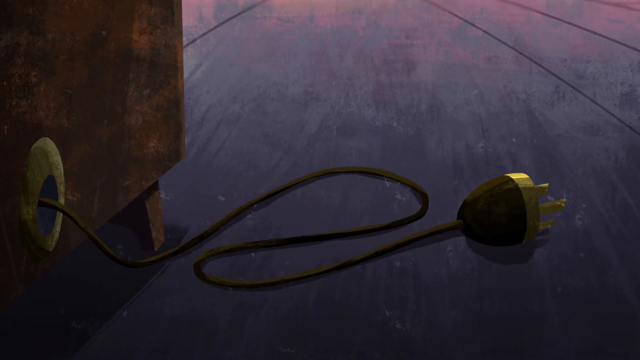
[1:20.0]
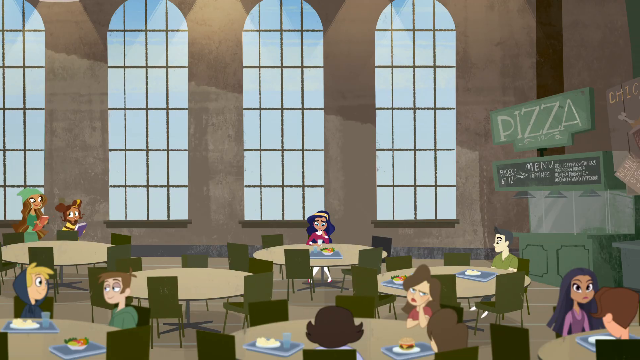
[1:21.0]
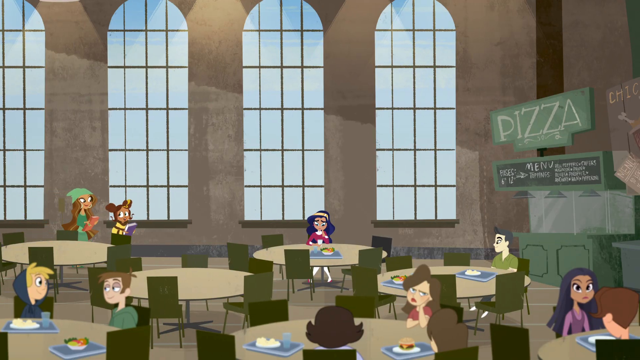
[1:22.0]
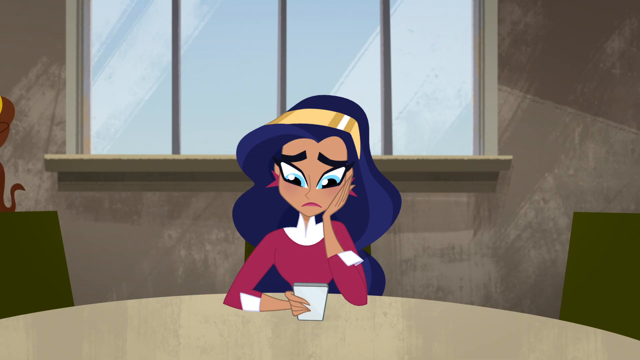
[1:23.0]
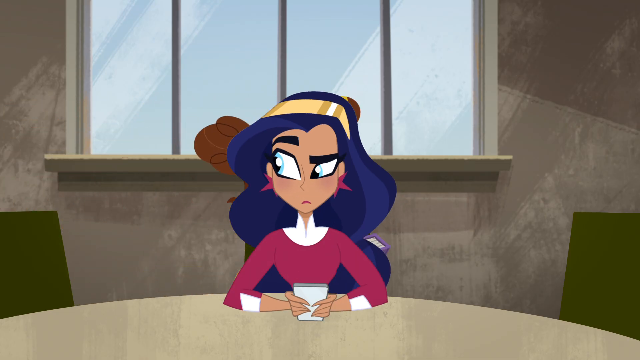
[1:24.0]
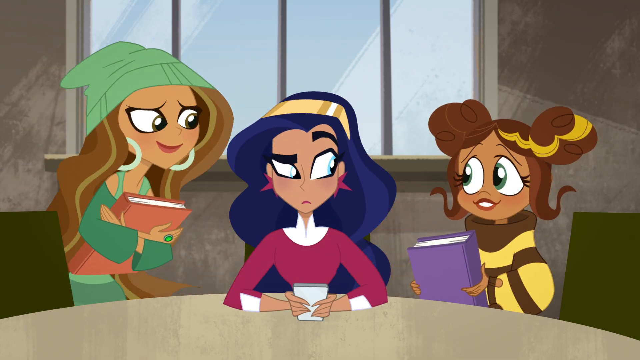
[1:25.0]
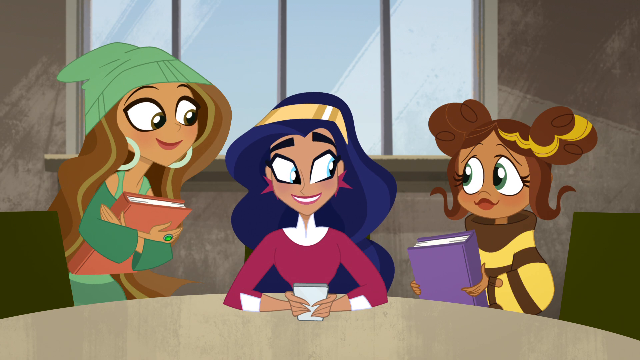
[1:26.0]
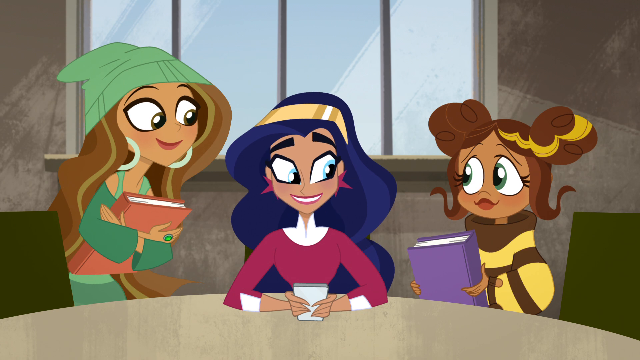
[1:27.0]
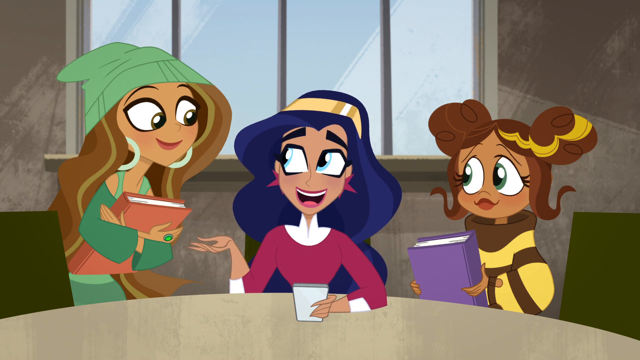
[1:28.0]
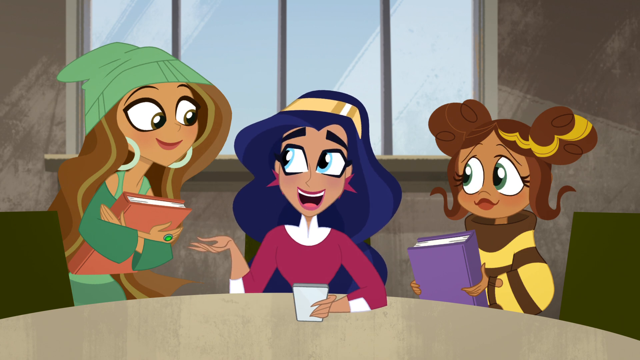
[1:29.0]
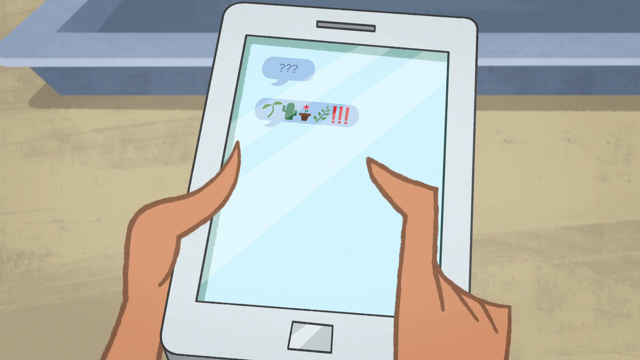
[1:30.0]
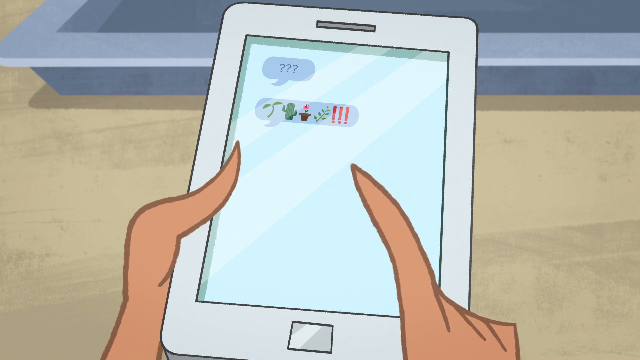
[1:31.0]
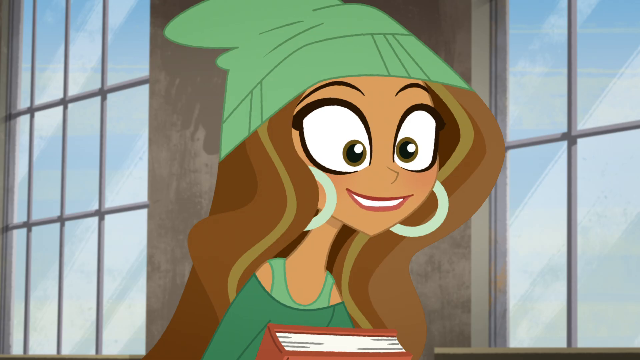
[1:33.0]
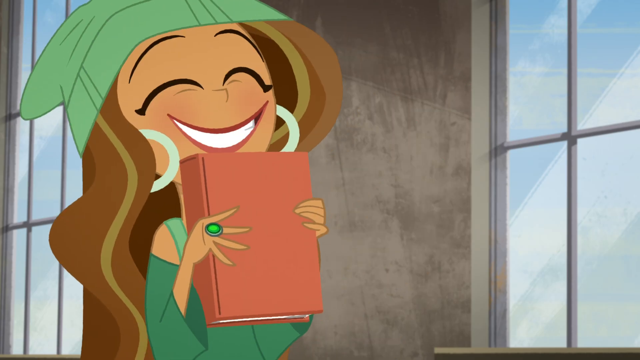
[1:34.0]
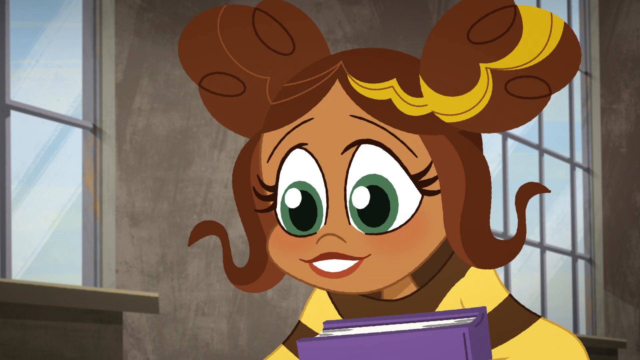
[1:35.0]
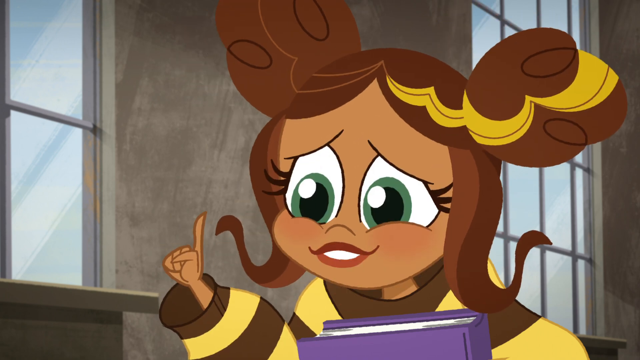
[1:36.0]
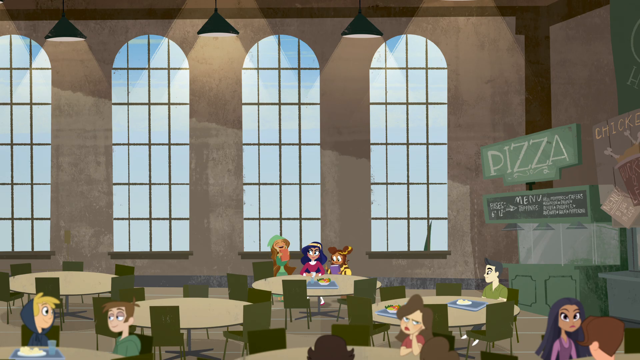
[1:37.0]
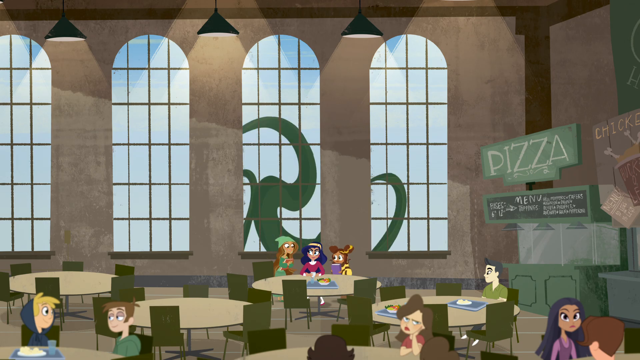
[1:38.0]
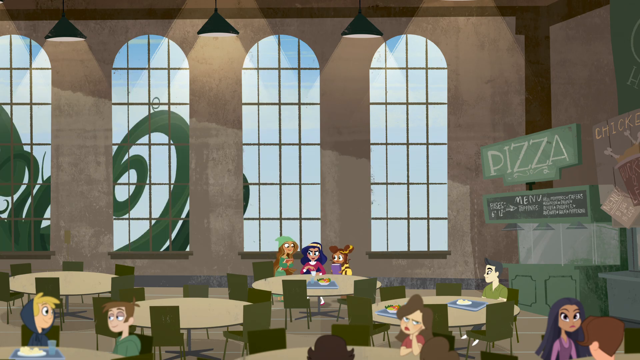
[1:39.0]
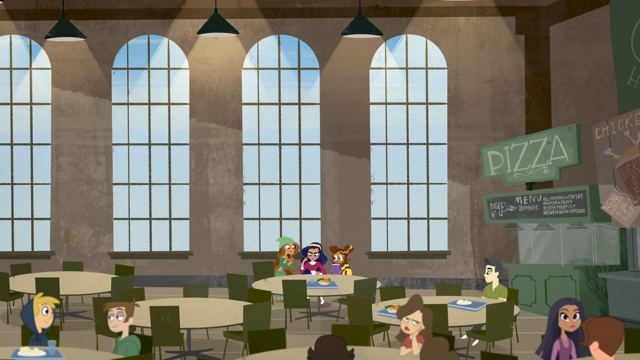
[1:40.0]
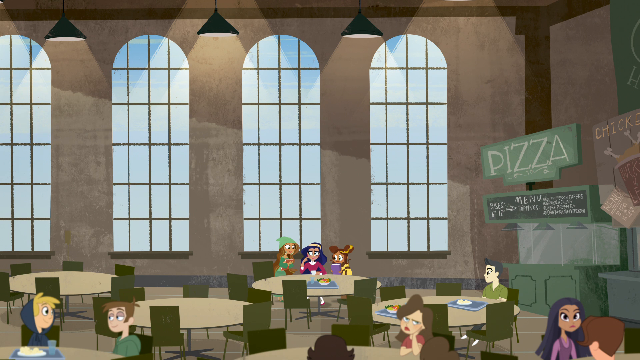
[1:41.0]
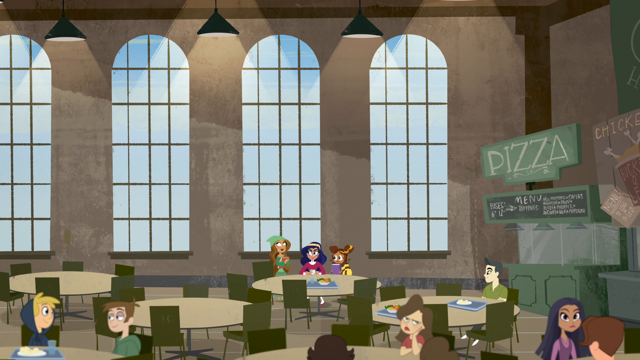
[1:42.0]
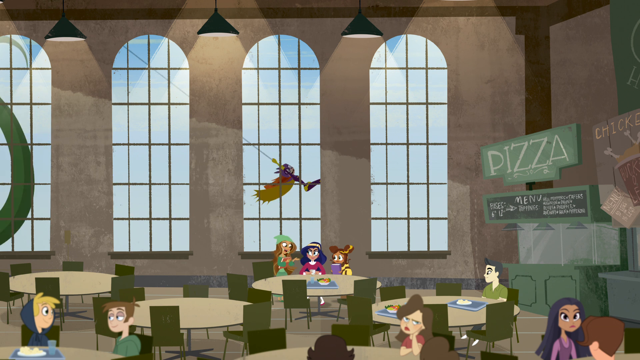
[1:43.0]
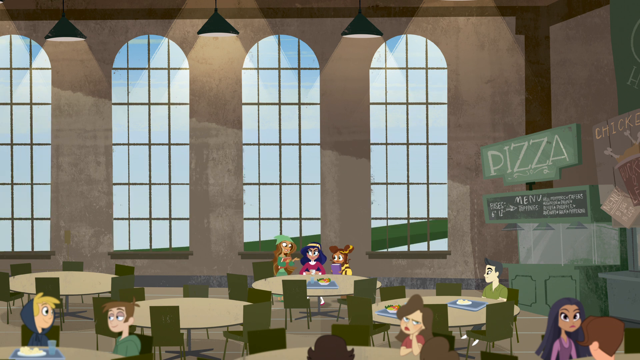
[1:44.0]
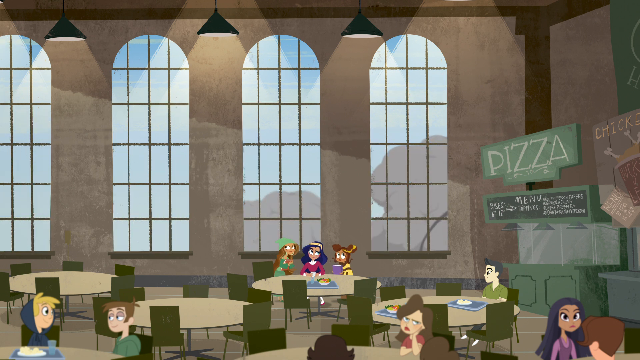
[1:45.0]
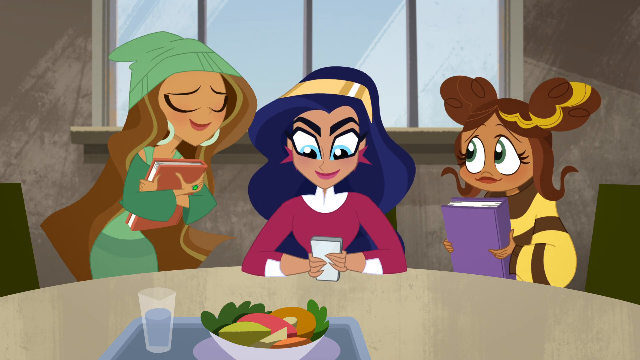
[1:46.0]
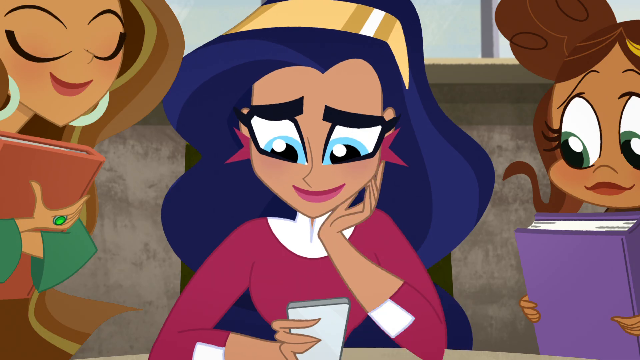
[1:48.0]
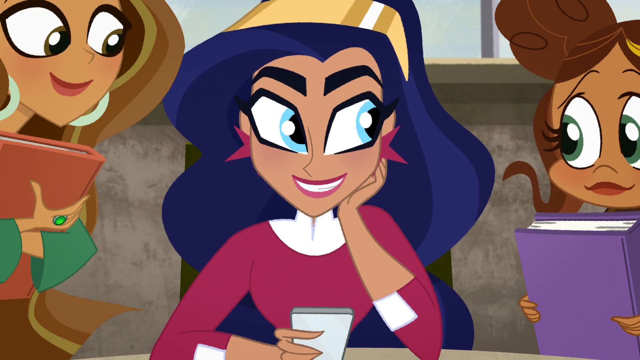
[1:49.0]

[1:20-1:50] The unplugged fortune-telling machine is shown, then the scene changes to the inside of a pizza parlor, with a pizza sign on the upper right wall. The girl with blue hair sits at a table looking very concerned. Two new characters walk in, one with brown hair and one wearing a green beanie, and begin talking to her; she shows them messages on her cell phone as if asking what they mean. Outside the pizza parlor's windows a tentacle monster appears and moves from left to right, and what looks like a superhero swings around, chasing or fighting it. The tentacle monster wraps up the superhero and pulls her in front of the window. The purple-suited superhero holds onto something to the right while the tentacle, wrapped around her waist, pulls her to the left.